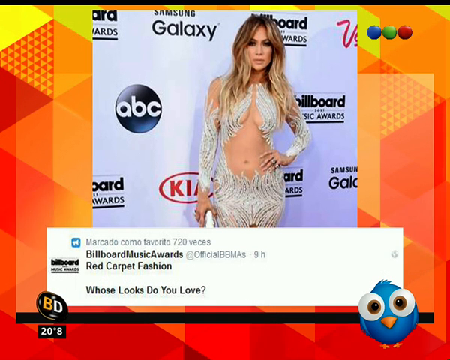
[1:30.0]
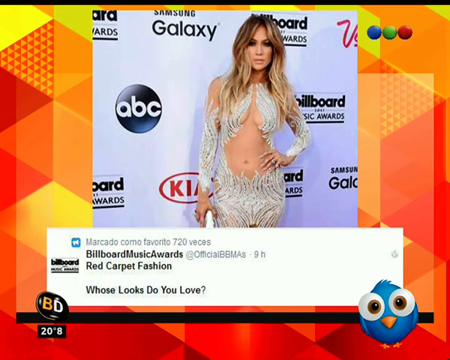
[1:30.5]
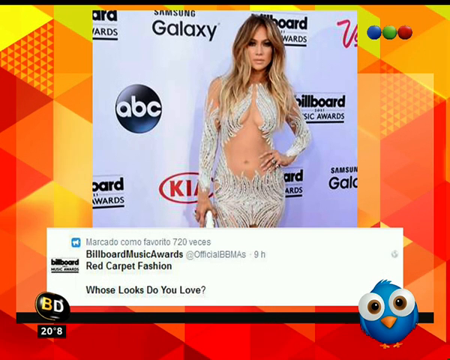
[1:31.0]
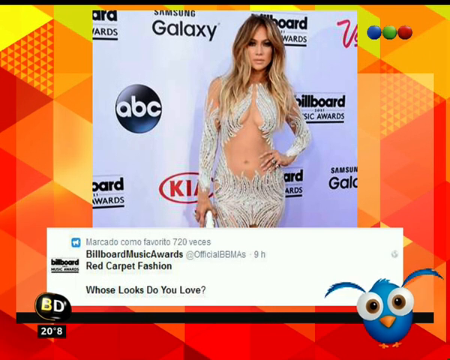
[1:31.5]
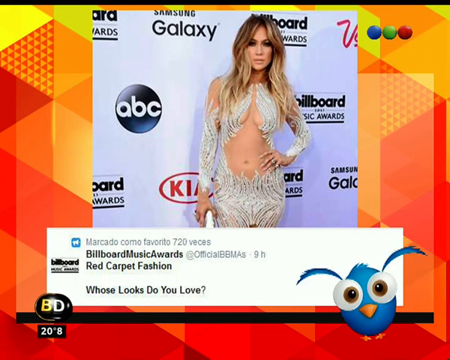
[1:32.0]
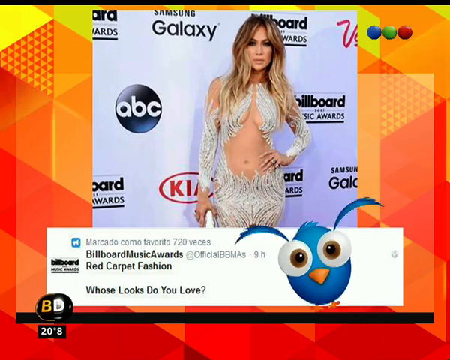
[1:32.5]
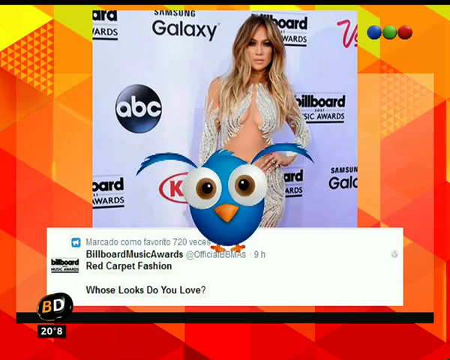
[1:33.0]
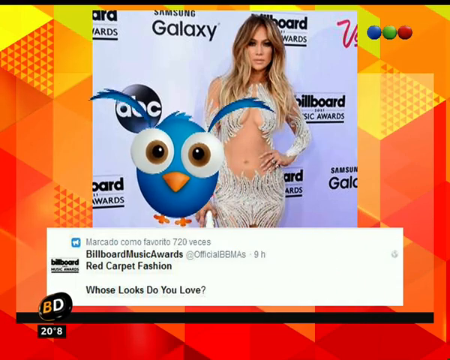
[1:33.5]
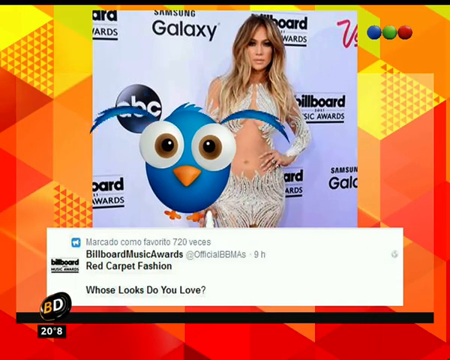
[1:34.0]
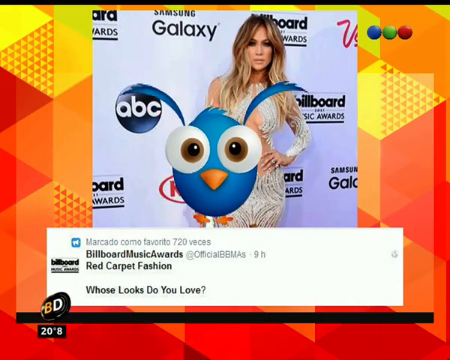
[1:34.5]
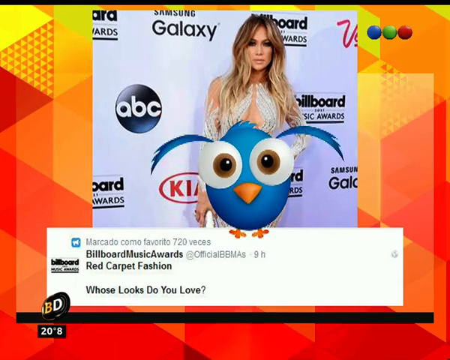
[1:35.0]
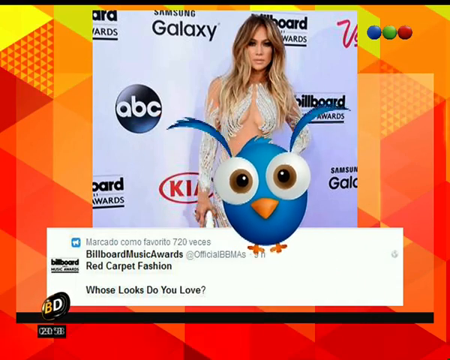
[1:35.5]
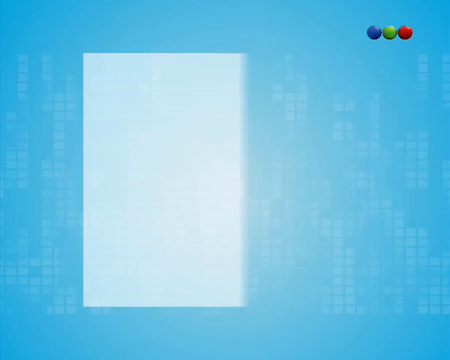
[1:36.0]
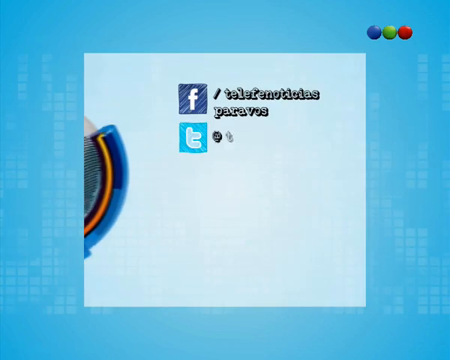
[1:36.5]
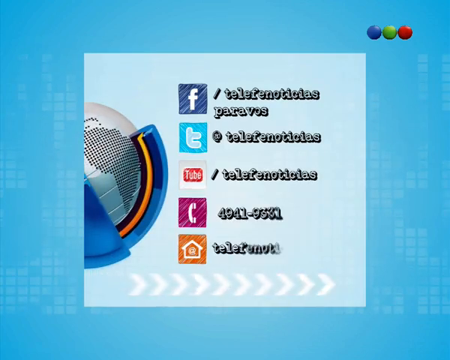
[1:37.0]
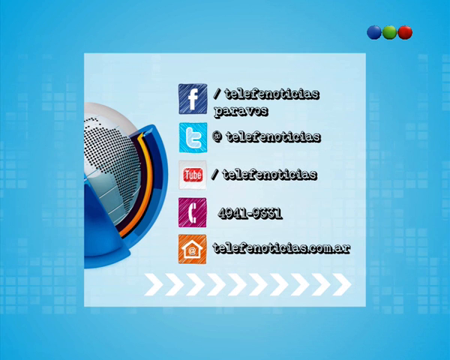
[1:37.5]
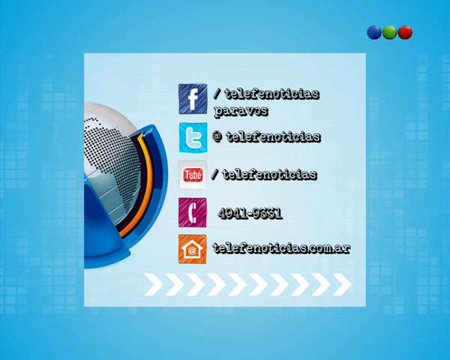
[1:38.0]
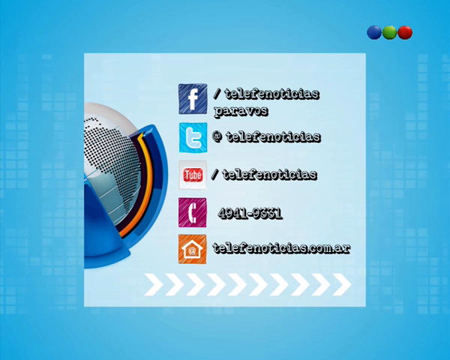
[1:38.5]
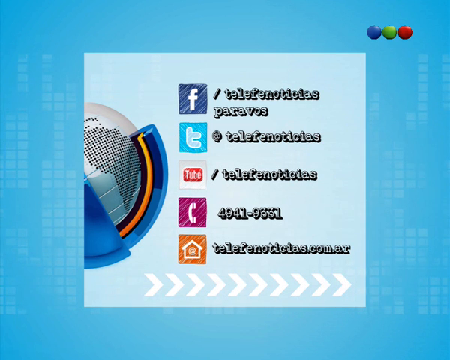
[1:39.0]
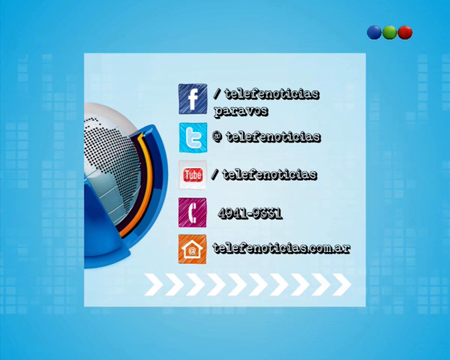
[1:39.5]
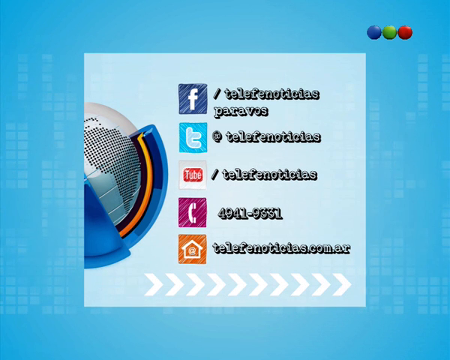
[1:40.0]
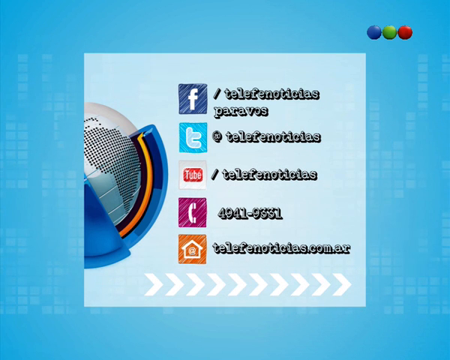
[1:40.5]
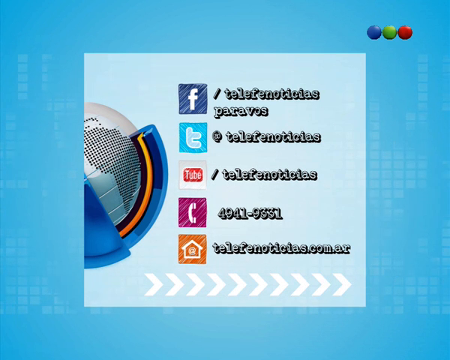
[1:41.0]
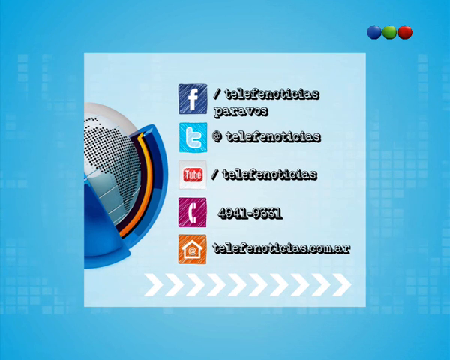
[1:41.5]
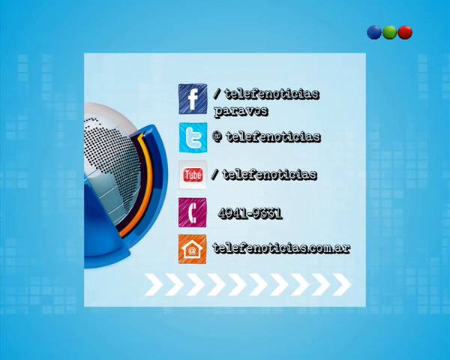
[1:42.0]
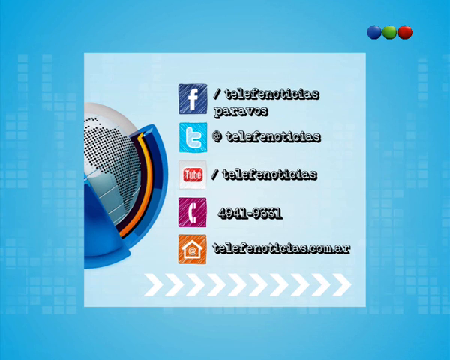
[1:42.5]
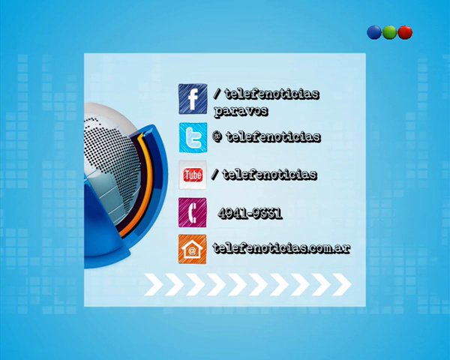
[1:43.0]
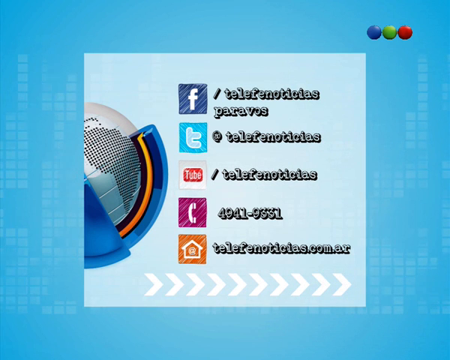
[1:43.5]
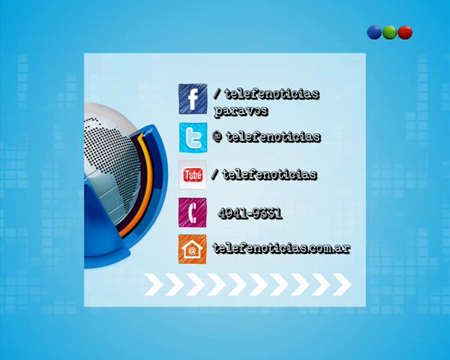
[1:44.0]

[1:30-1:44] Jennifer Lopez is at the Billboard Music Awards, with advertising signs behind her reading "Billboard Awards," "Samsung Galaxy," "ABC," "Billboard Music Awards," "Kia" and "Samsung Galaxy." She wears a very revealing white dress. The tops of her arms are bare, and an upside-down heart shape at her chest shows the bottom of her chest, with the opening going all the way down to her belly button, and a little material further down. Text reads "whose looks do you love?" The BD logo is on the left and the bird on the right. The bird gets up and flies away. A screen follows listing Facebook, telephone notifications, YouTube, phone and home: Facebook is "Telefications Paravatos," Twitter is "Telefinoticias," YouTube is "/Telefonicias," phone is "4941-9331," and home is "Telefonicias.com.ar." The screen has a blue background with a picture of the world to the left and blue on the edges. Then the two people in the studio appear: the man in a blue shirt and black pants, and the woman in blue jeans and a striped shirt.